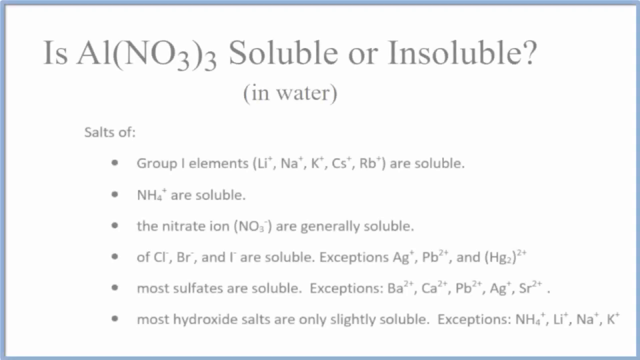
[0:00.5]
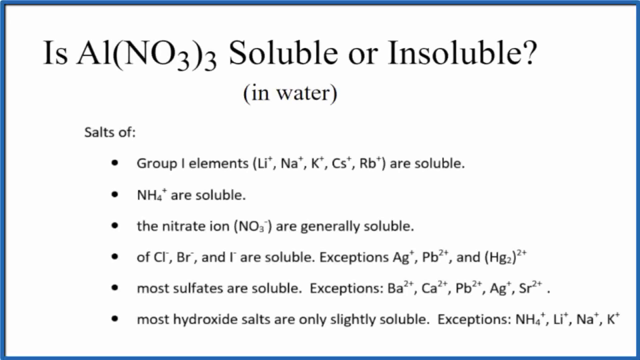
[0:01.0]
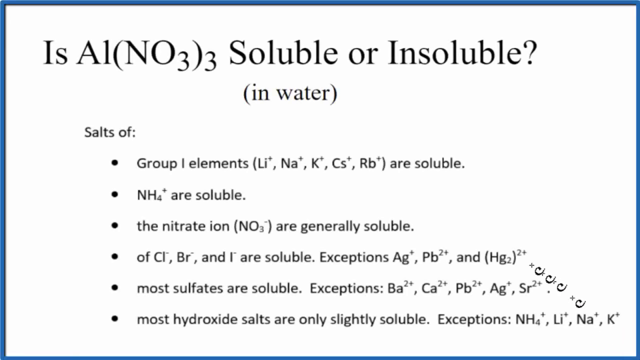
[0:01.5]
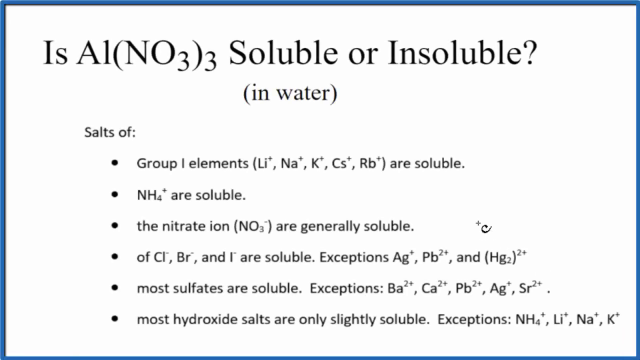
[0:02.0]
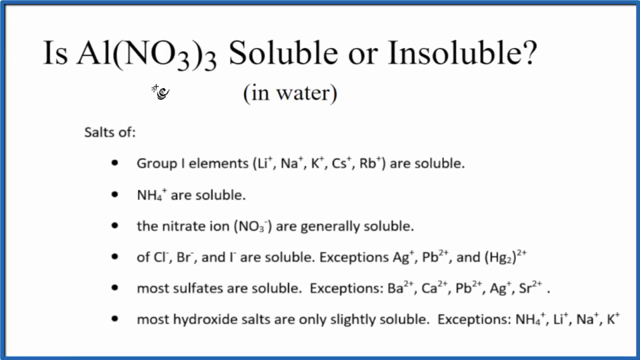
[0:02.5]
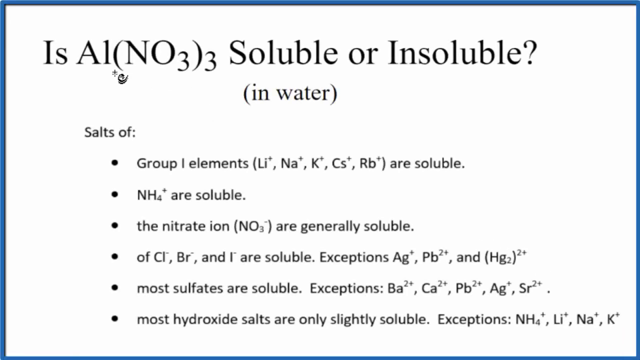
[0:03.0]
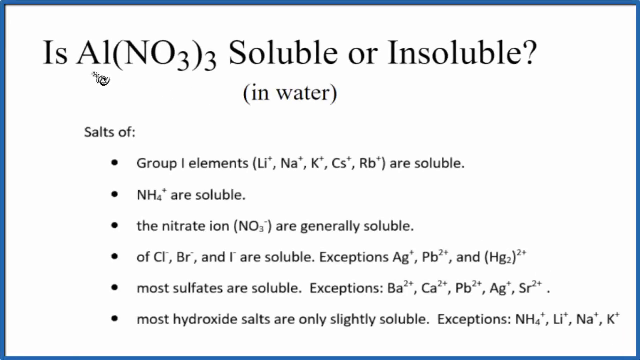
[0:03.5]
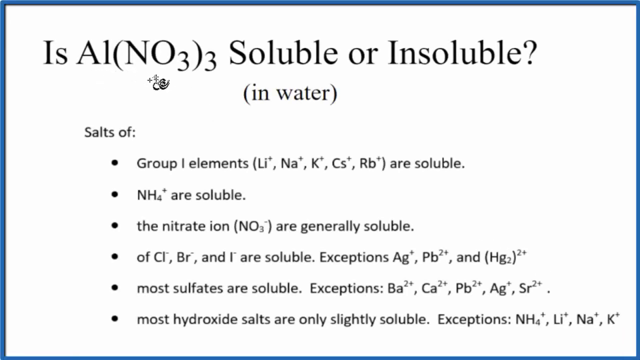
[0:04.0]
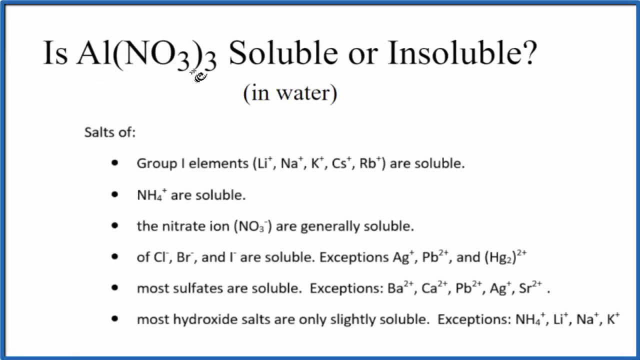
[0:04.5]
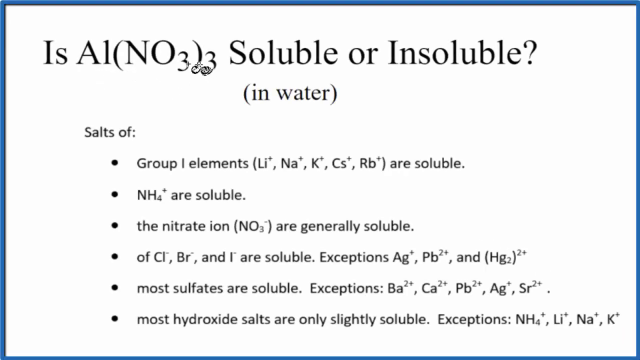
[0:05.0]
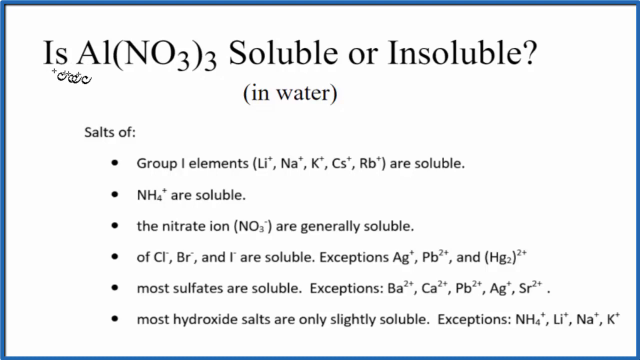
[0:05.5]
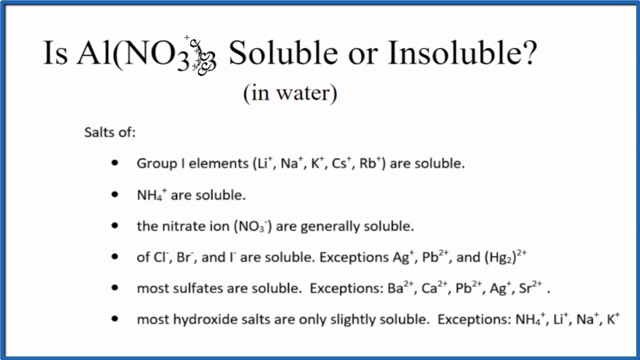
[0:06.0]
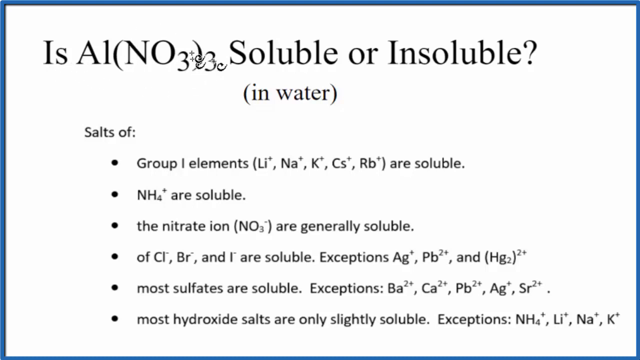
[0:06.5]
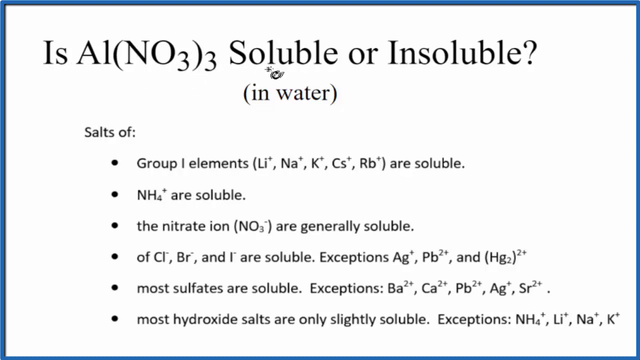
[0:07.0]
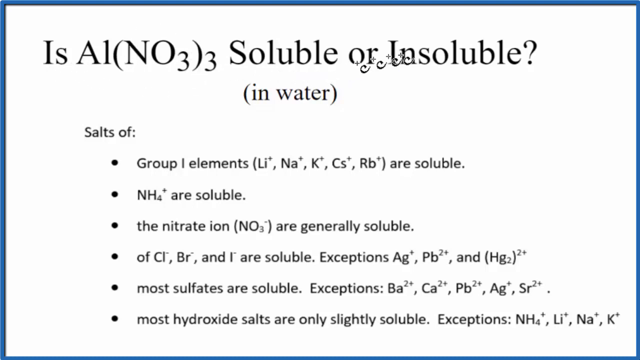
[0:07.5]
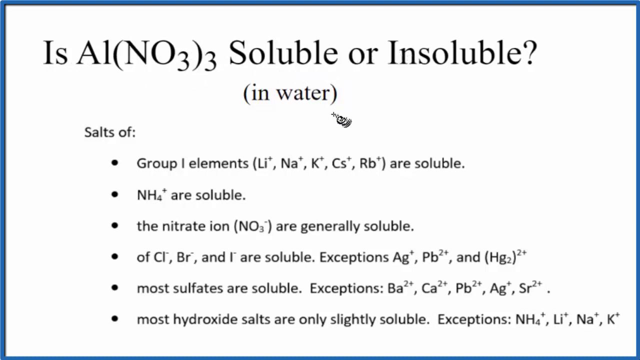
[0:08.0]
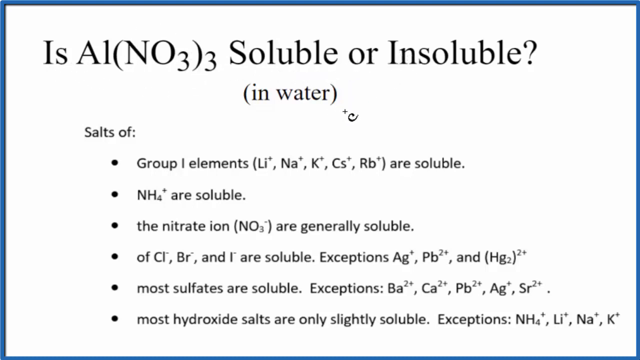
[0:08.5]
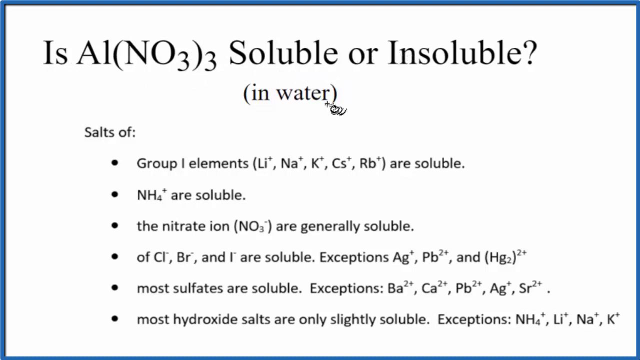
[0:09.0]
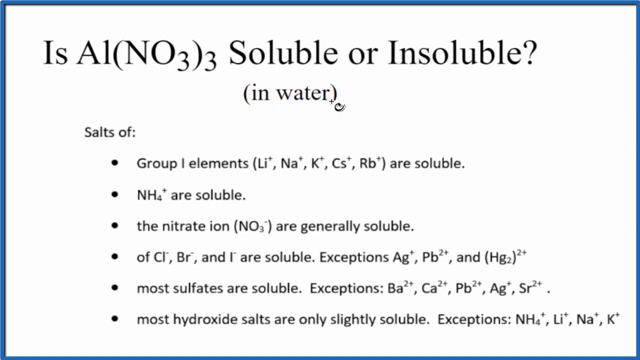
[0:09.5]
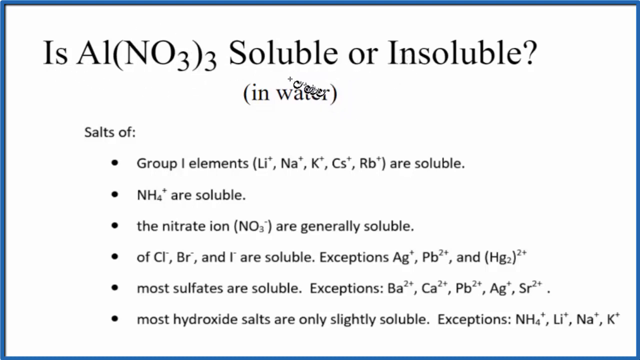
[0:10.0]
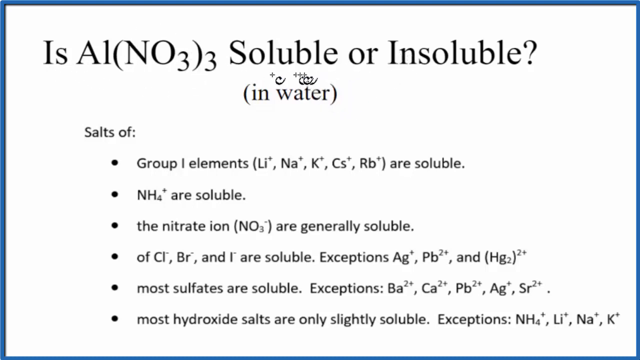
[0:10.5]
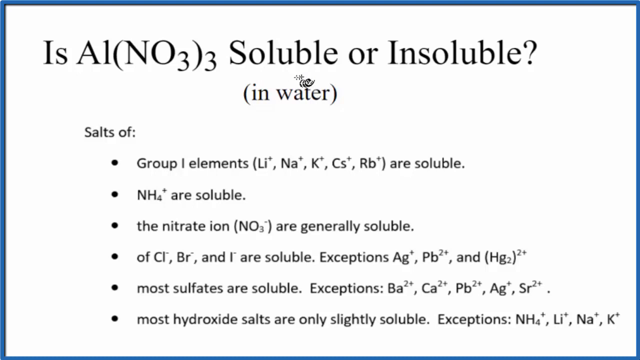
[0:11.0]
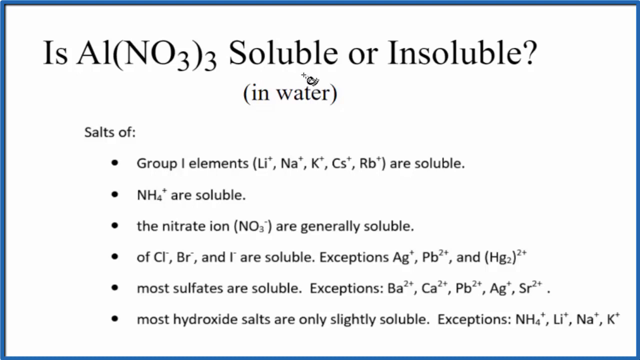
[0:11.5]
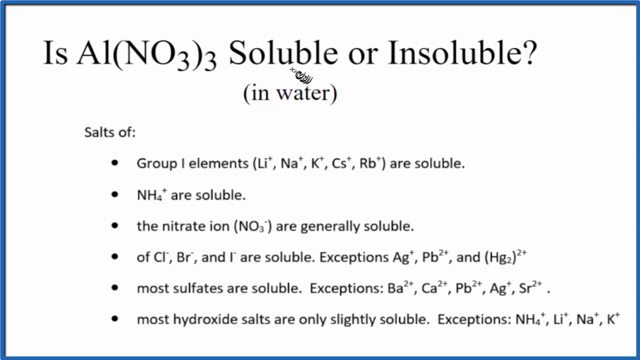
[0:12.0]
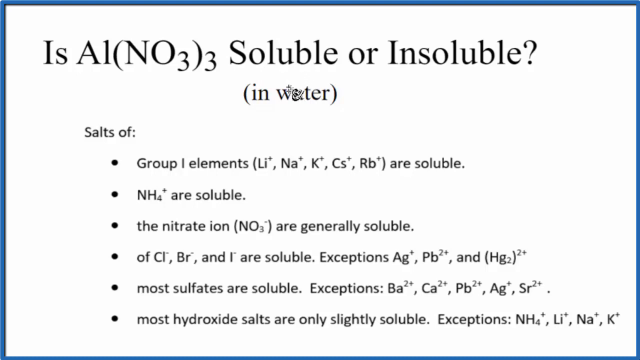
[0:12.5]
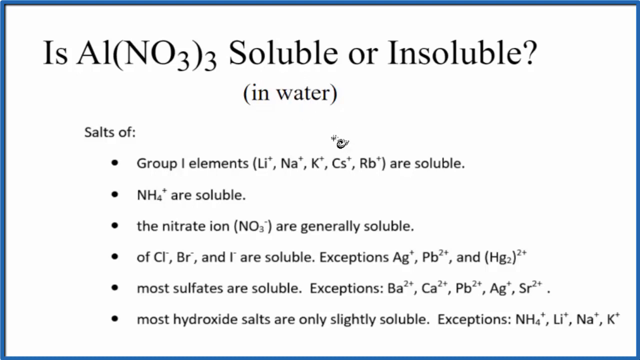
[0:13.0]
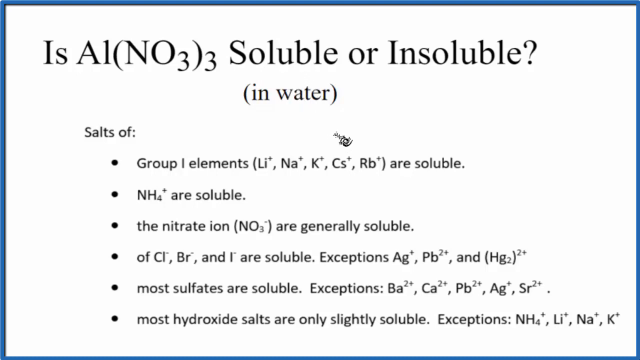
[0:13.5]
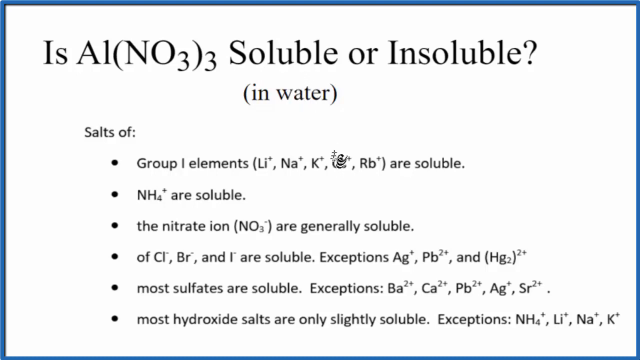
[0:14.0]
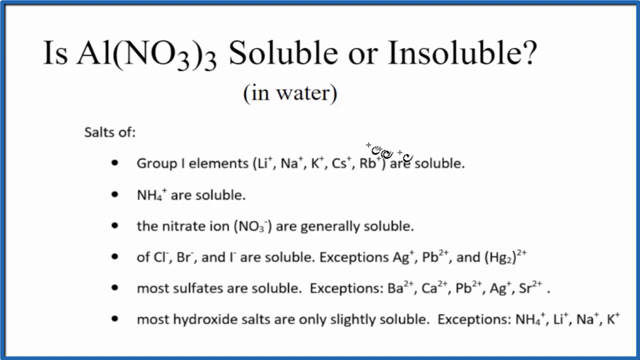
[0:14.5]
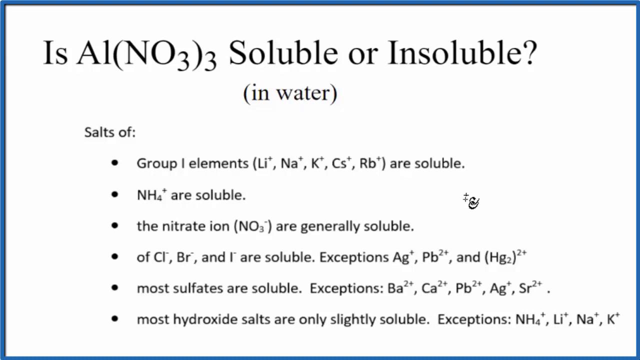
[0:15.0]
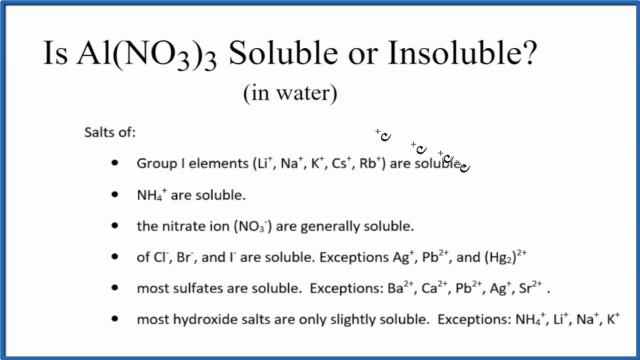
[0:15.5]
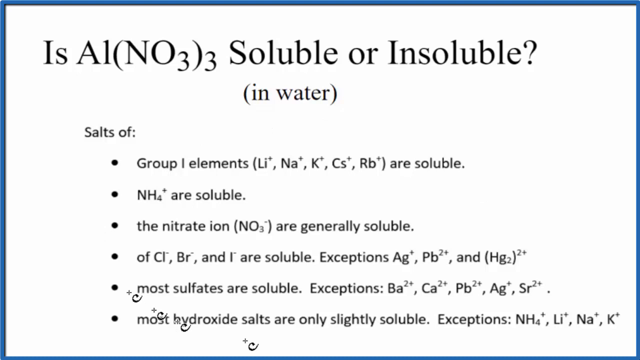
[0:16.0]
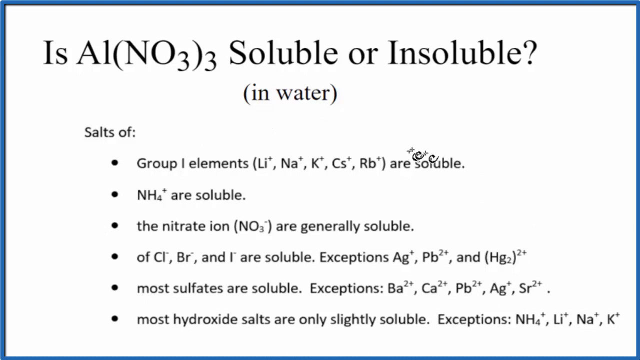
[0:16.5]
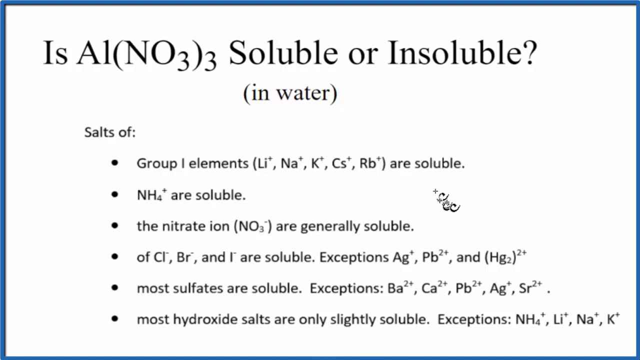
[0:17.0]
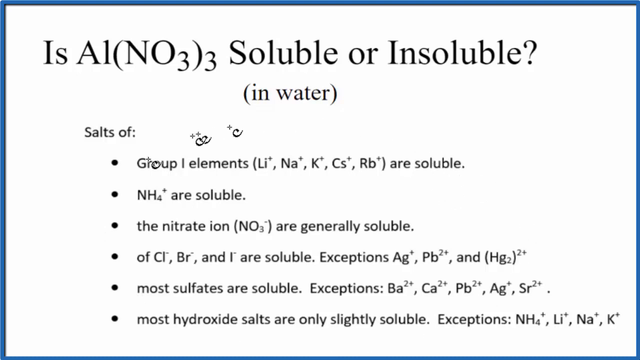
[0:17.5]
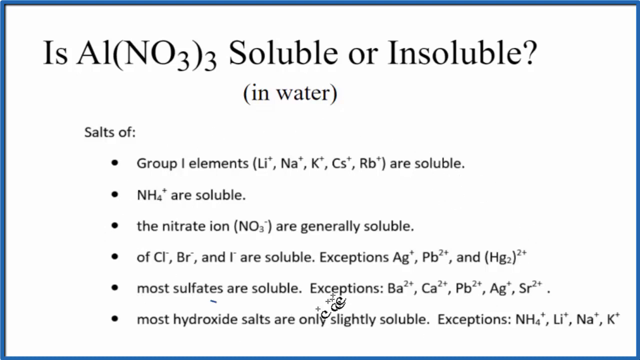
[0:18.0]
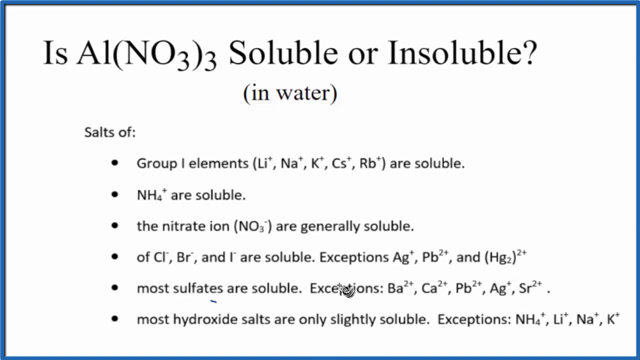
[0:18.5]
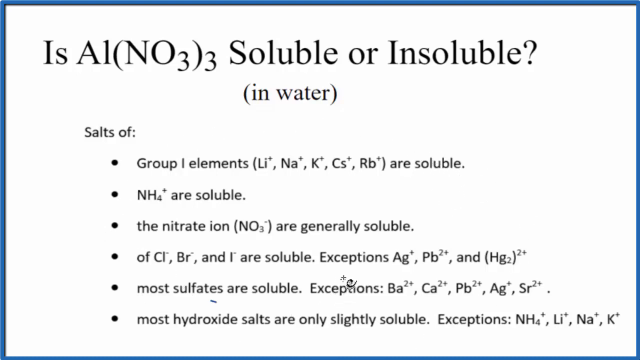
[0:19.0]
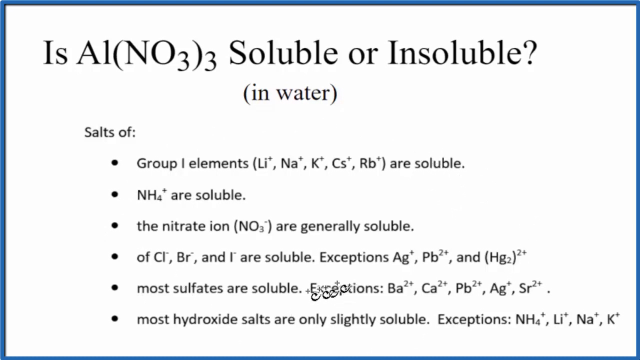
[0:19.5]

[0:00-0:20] The screen is filled with black text on a white background. The title across the top reads "is AI (NO3) 3 soluble or insoluble (in water)". Underneath, a line of text reads "salts of:" followed by a bulleted list. The first line reads "Group 1 elements Li, Na, K, Cs, Rb are soluble"; the second, "NH4 are soluble"; the third, "the nitrate ion, NO3, are generally soluble"; the fourth, "of Cl, Br and I are soluble. Exceptions, Ag, Pb and Hg2"; the fifth, "most sulfates are soluble. Exceptions, Ba2+, Ca2+, Pb2+, Ag+, Sr2+"; and the sixth, "most hydroxide salts are only slightly soluble. Exceptions, NH4, Li, Na, K". A cursor moves around the screen in a seemingly fairly random way, kind of dancing around rather than following each line of text, and it seems to circle all of the text at the end.